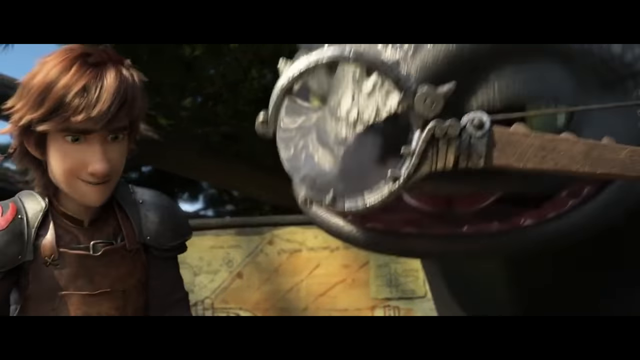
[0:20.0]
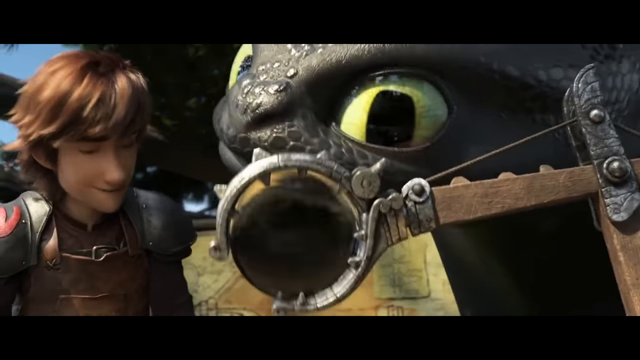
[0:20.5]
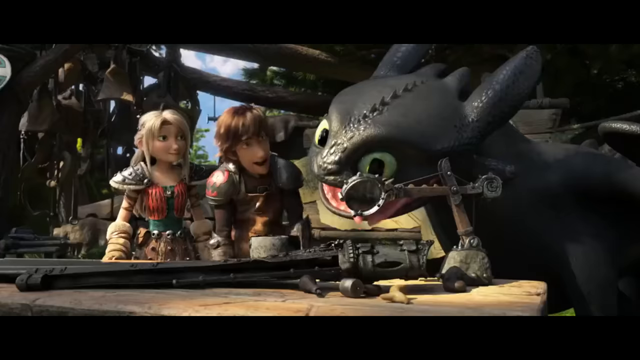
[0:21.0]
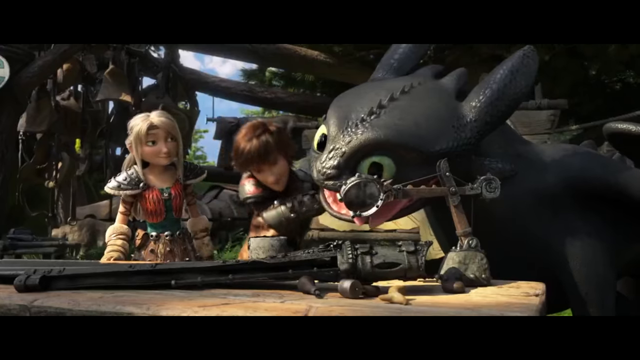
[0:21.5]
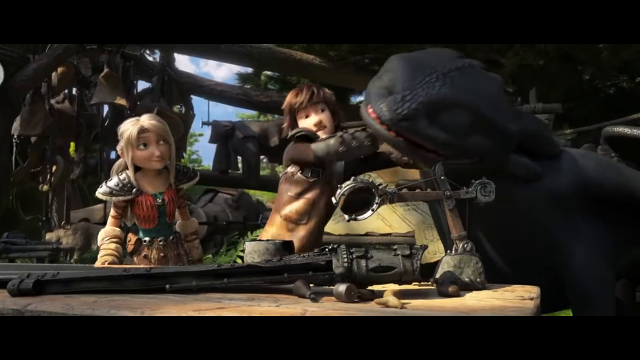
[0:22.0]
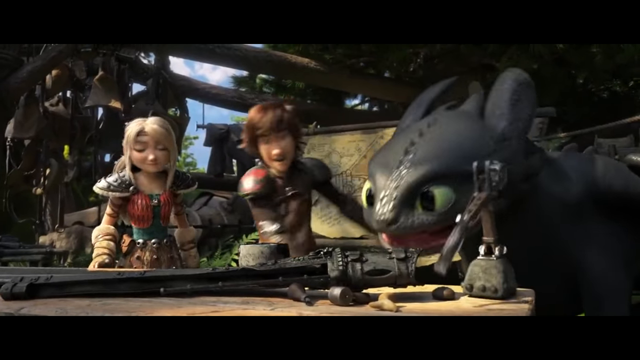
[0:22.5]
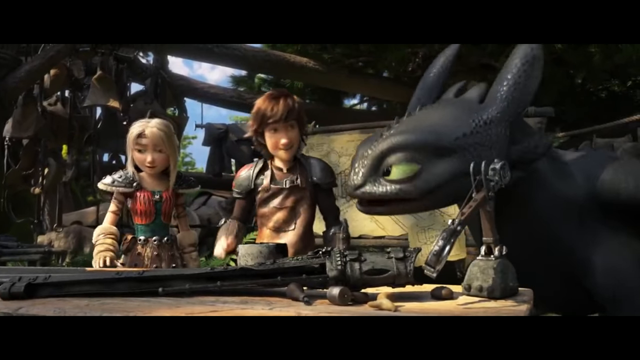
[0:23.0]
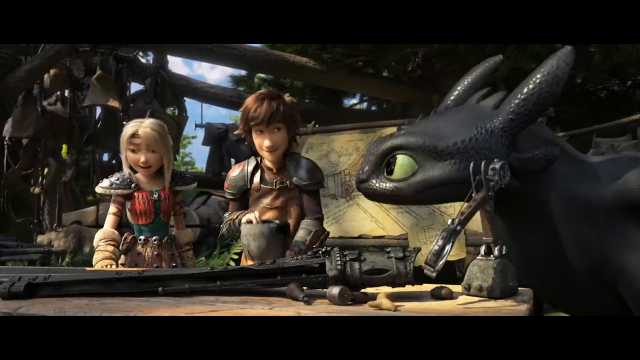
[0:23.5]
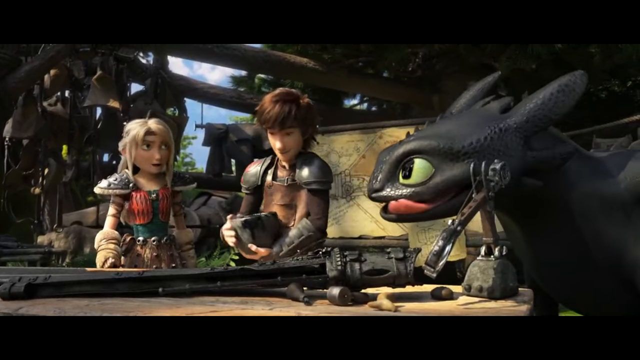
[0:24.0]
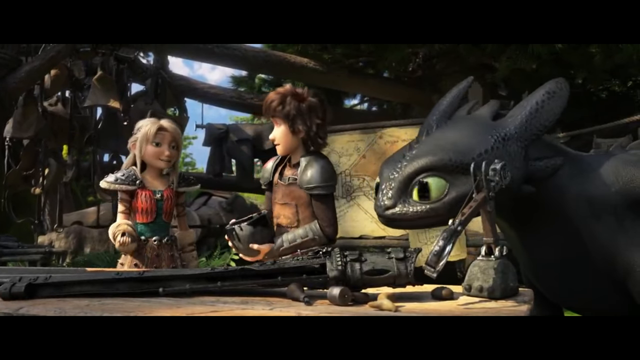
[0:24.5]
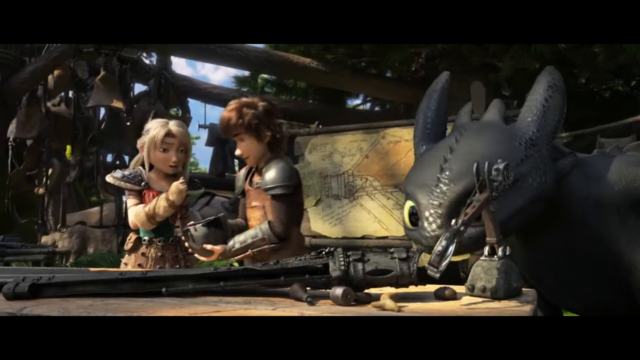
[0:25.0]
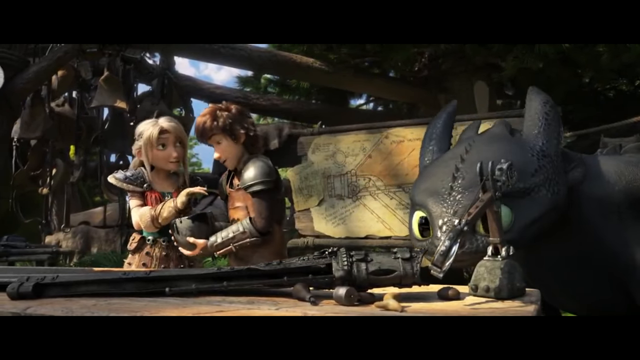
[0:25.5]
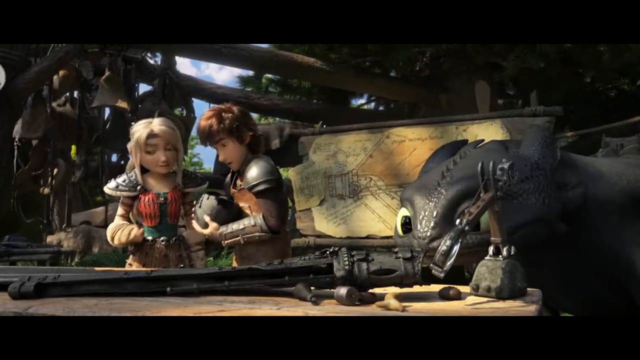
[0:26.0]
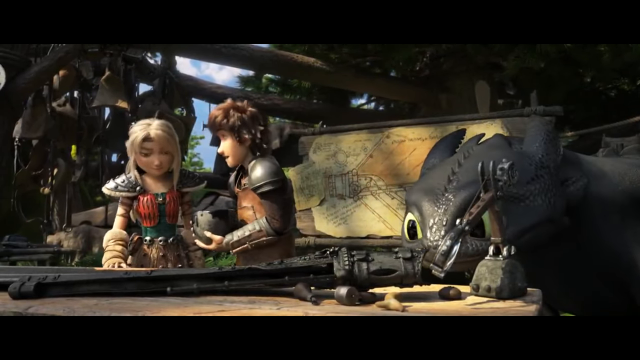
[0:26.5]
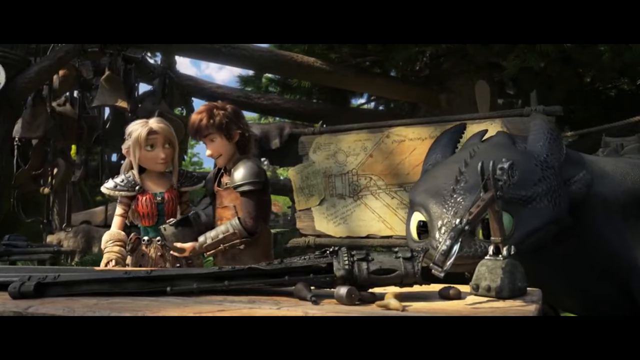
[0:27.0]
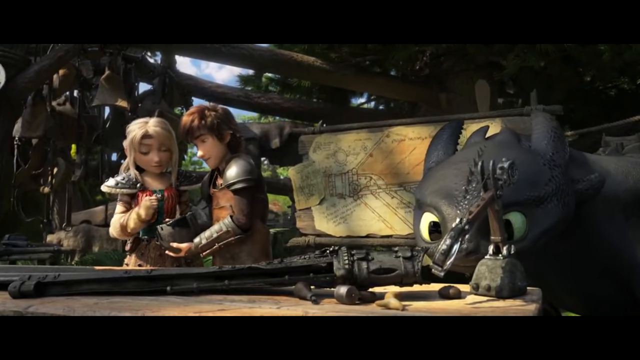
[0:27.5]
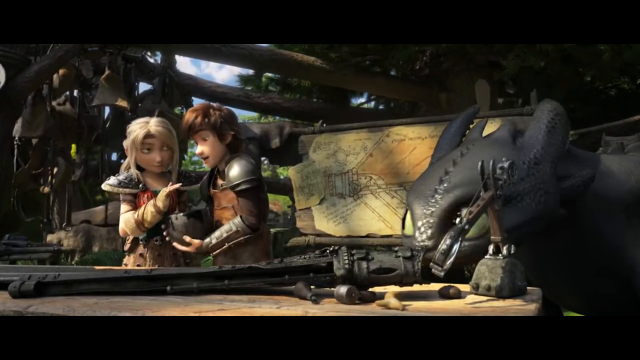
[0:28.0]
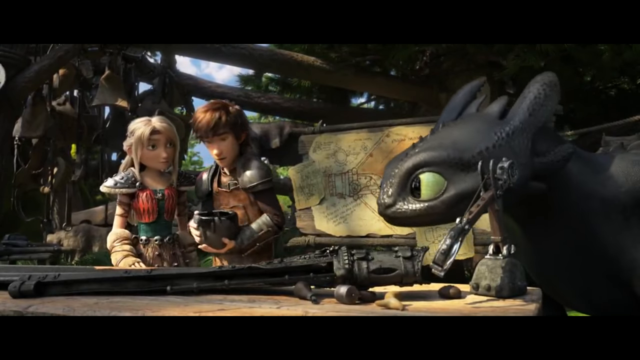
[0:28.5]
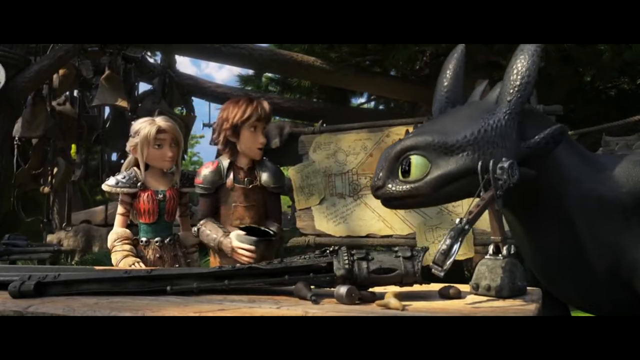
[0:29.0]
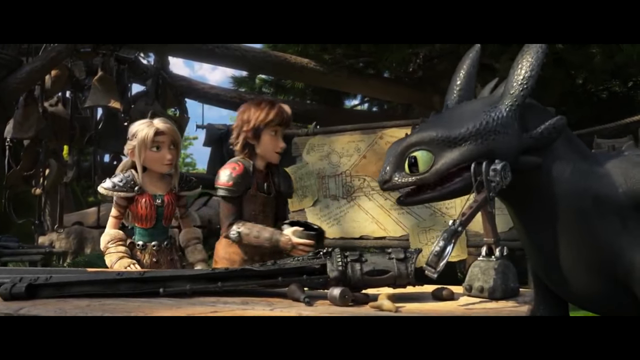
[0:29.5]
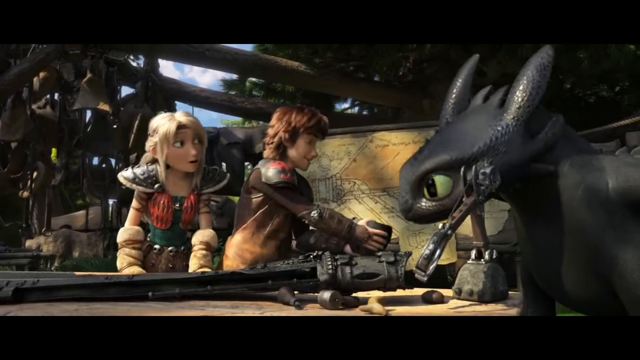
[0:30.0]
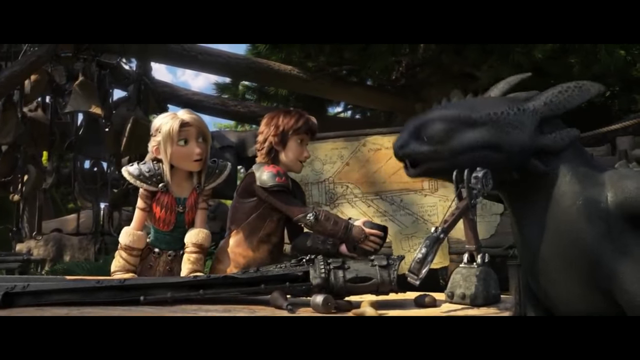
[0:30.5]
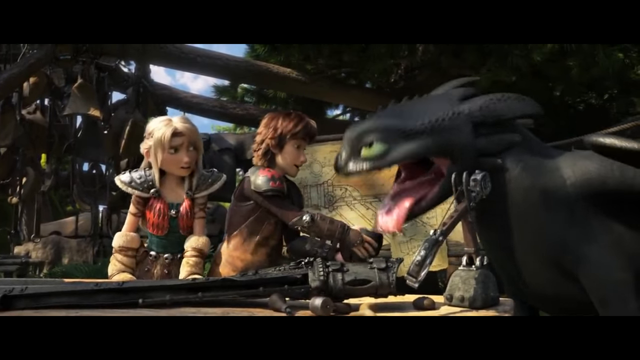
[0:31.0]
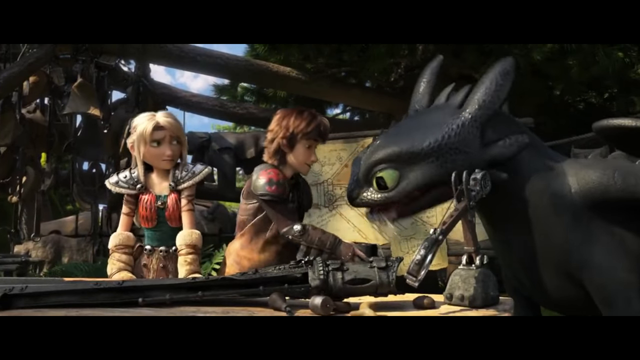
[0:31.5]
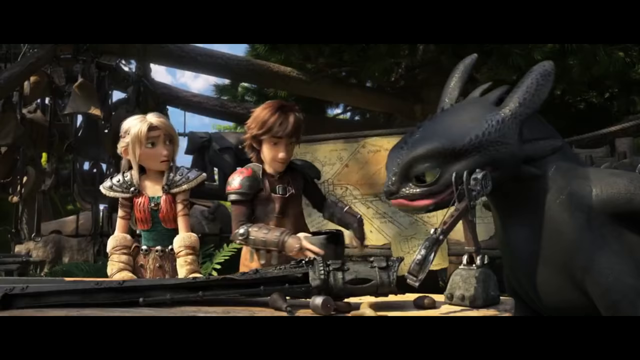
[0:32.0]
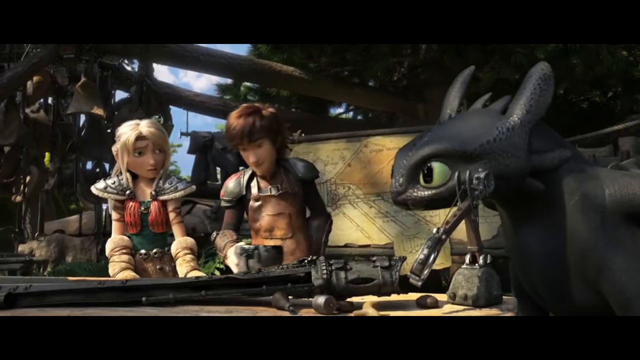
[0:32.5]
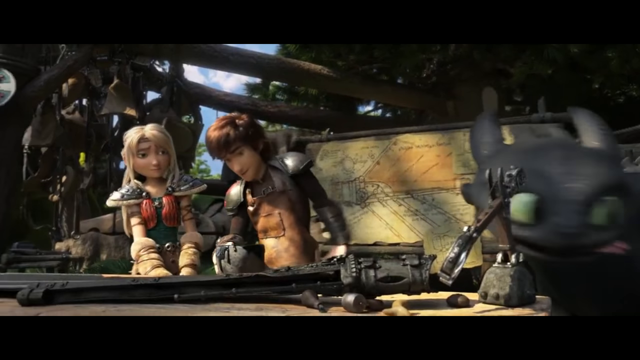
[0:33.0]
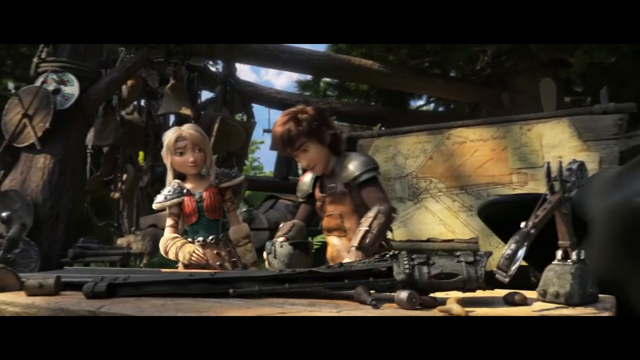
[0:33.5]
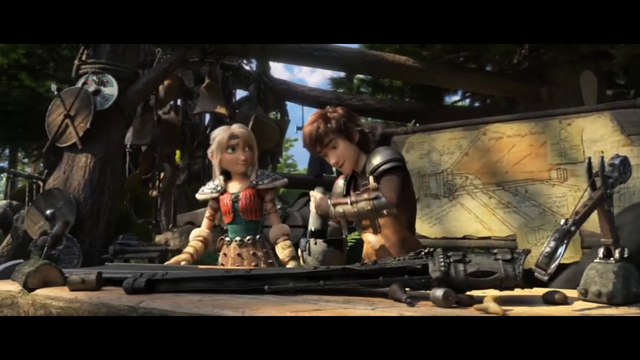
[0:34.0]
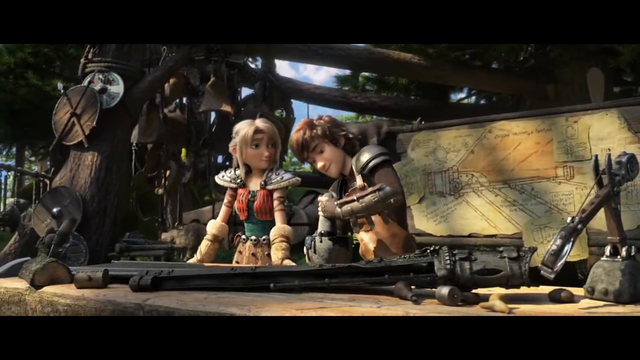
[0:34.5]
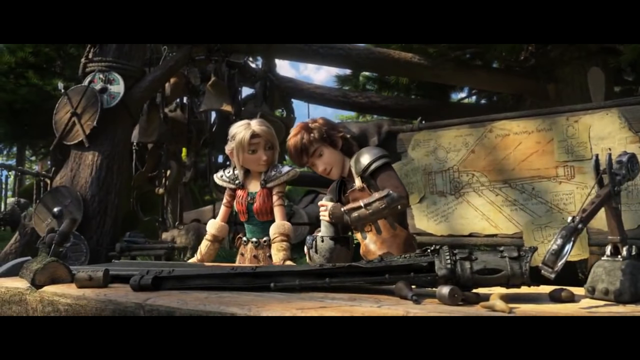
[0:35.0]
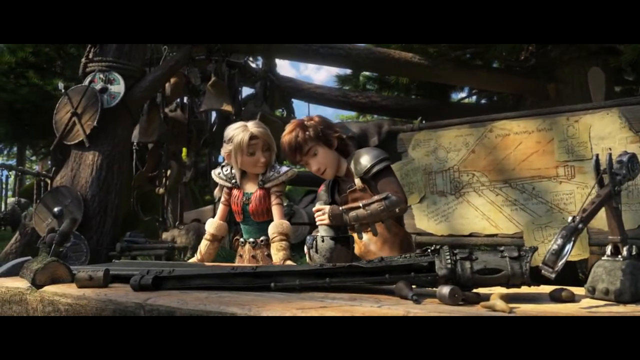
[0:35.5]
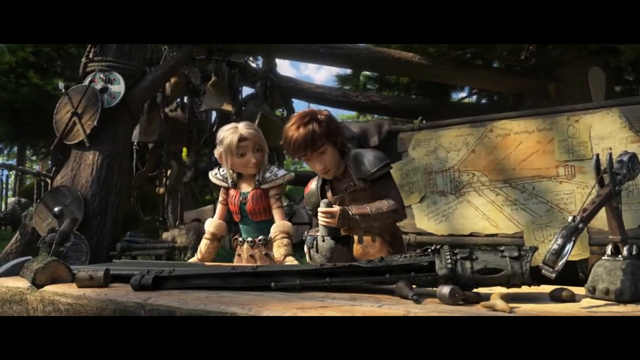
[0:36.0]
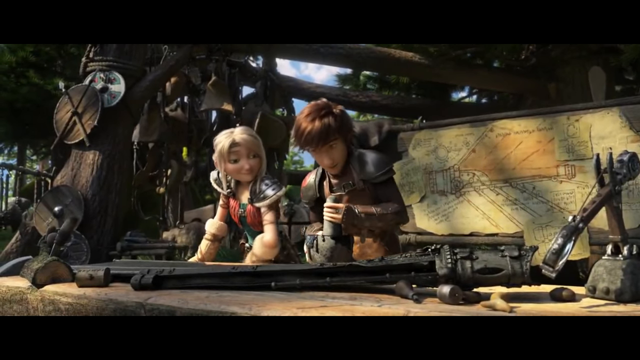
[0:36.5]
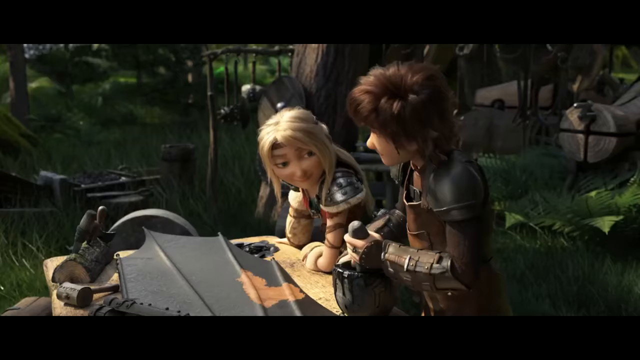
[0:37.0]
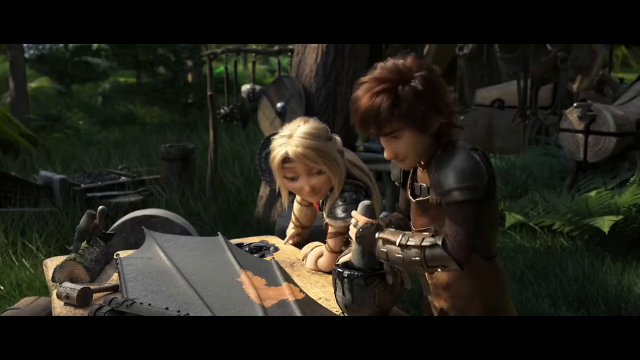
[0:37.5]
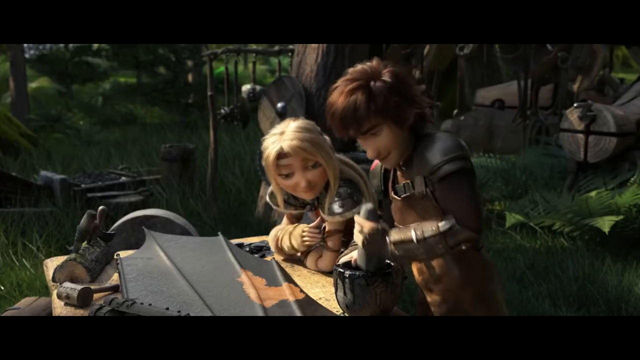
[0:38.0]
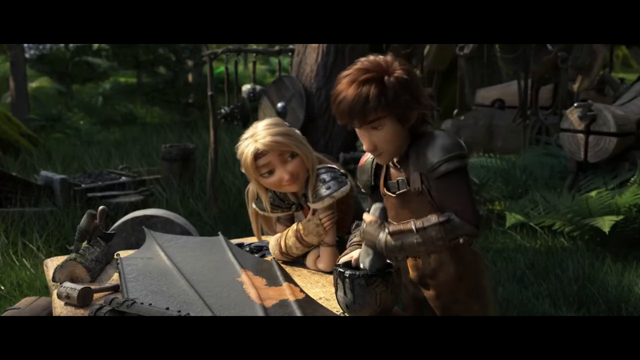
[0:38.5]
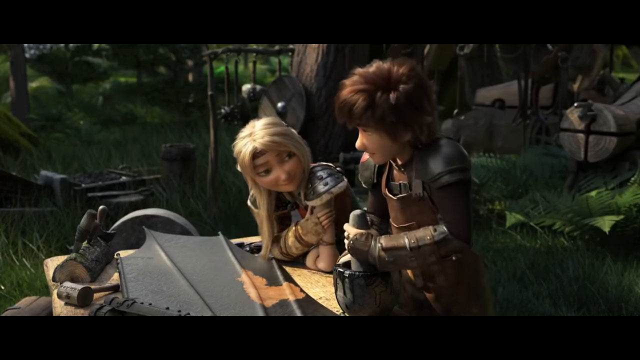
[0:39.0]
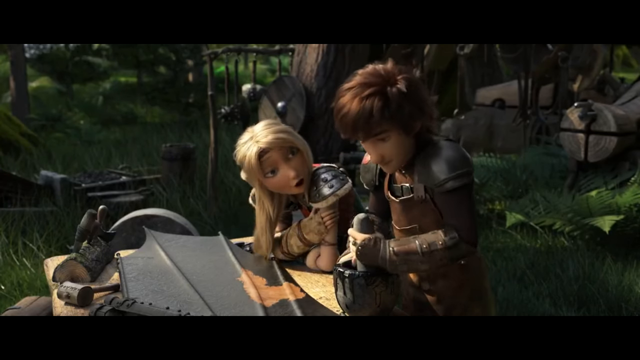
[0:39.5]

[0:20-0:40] The scene appears to be from an animated kids' movie. On the right-hand side is a black creature, possibly a dragon or some type of pet, oddly shaped, looking through a magnifying glass with its eye. A boy with brown hair is there, and a nudge happens. He then turns, holding what looks like a bowl or a helmet toward the woman, and the dragon walks away. The guy then appears to be crushing something in the bowl, like a bowl used to crush medicine, smashing it with the piece that fits into the bowl. He crushes it with the hand that appears on the left side of the screen as he faces the camera.